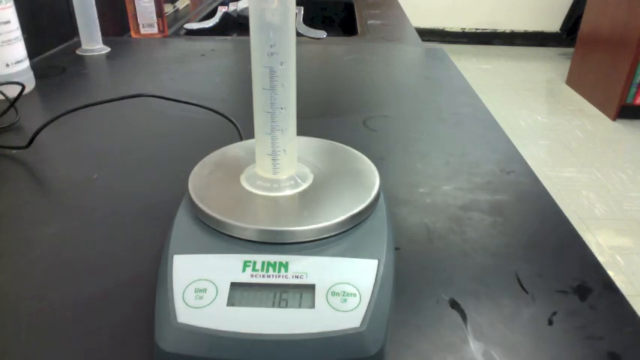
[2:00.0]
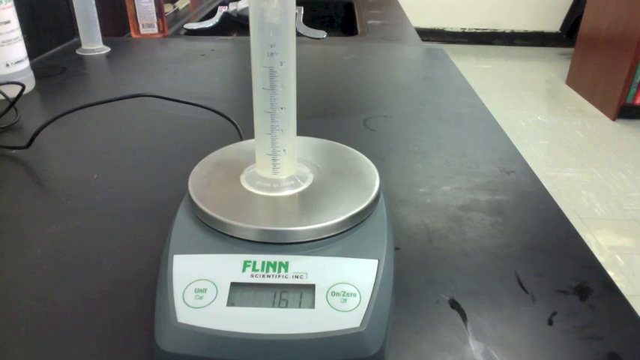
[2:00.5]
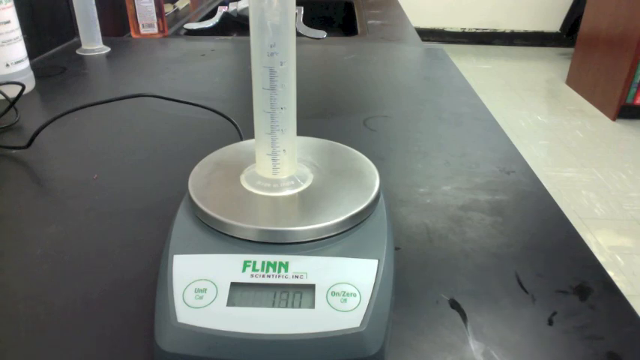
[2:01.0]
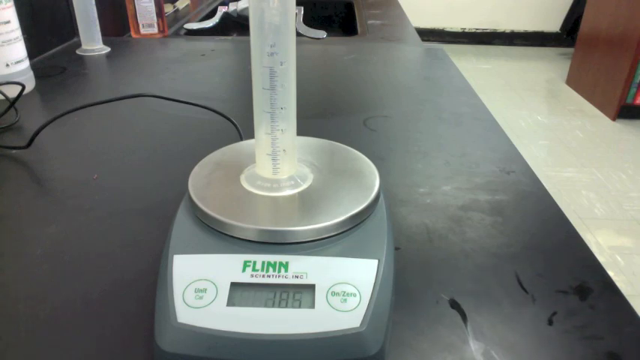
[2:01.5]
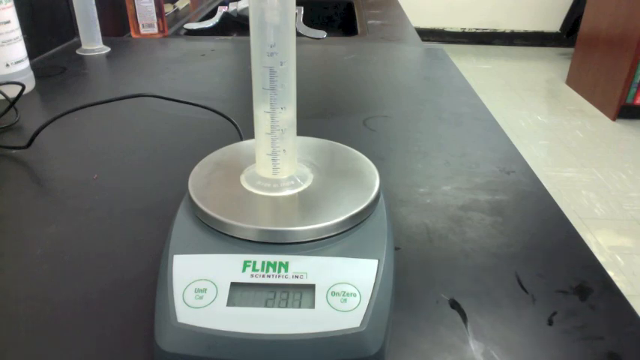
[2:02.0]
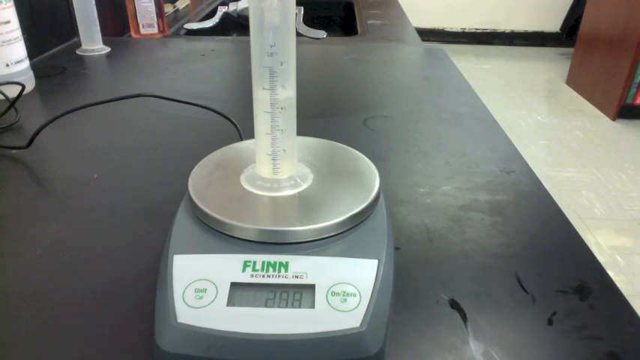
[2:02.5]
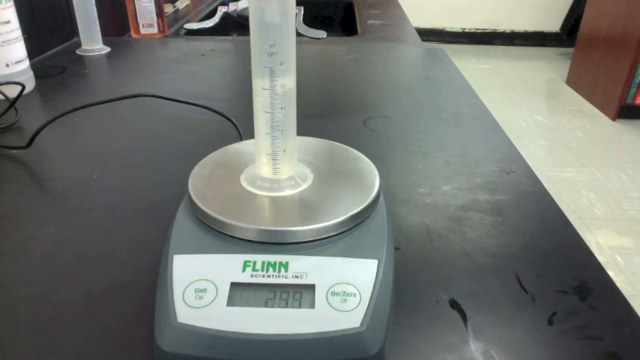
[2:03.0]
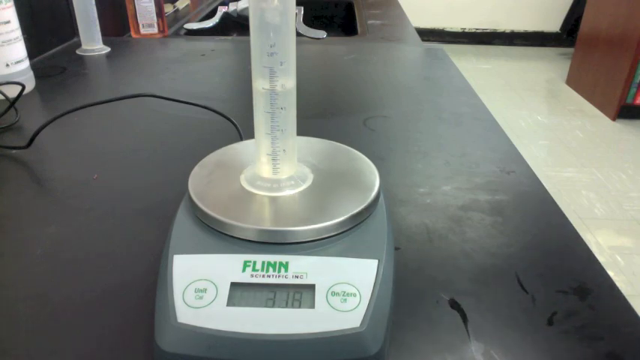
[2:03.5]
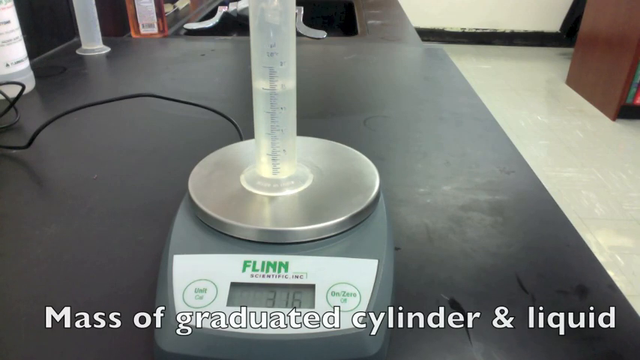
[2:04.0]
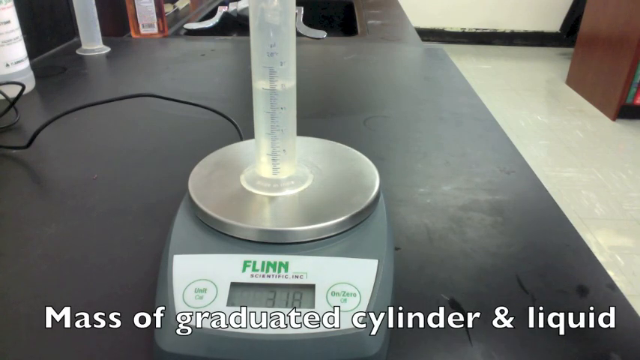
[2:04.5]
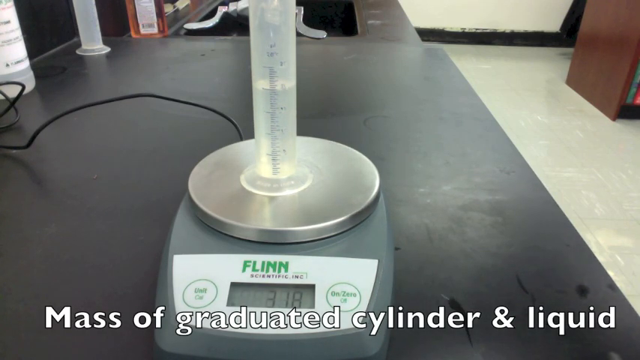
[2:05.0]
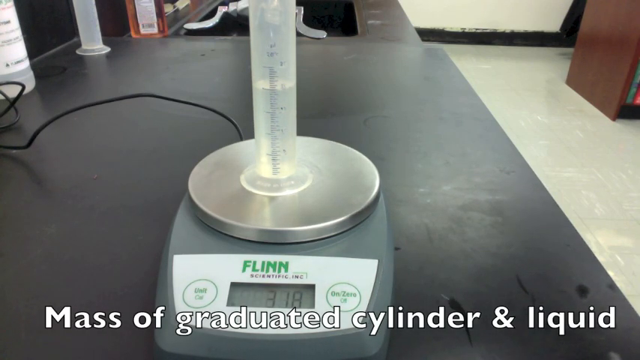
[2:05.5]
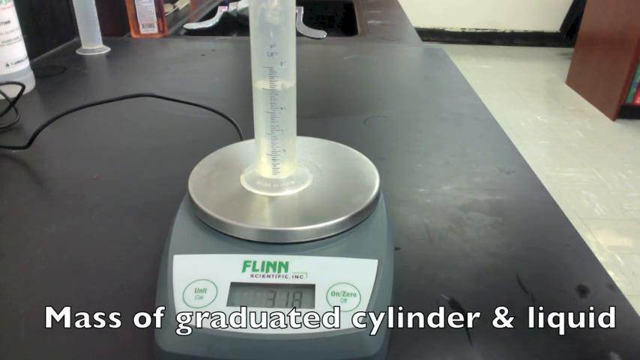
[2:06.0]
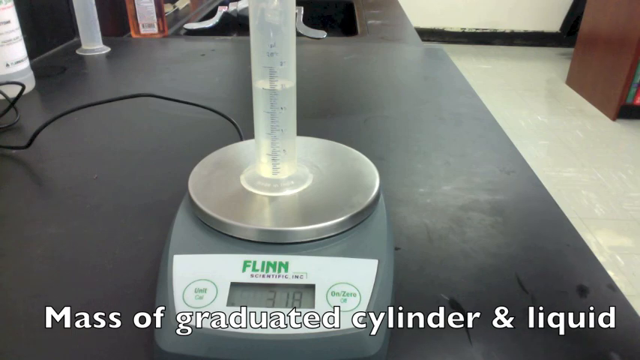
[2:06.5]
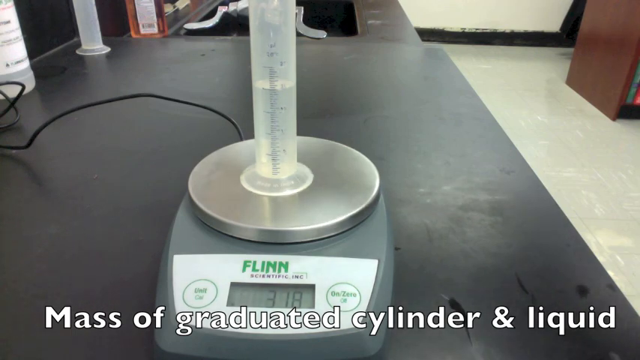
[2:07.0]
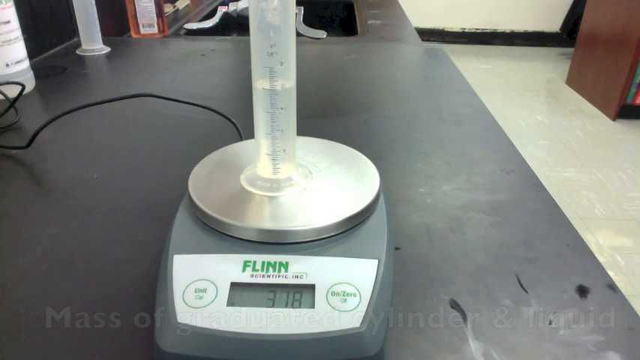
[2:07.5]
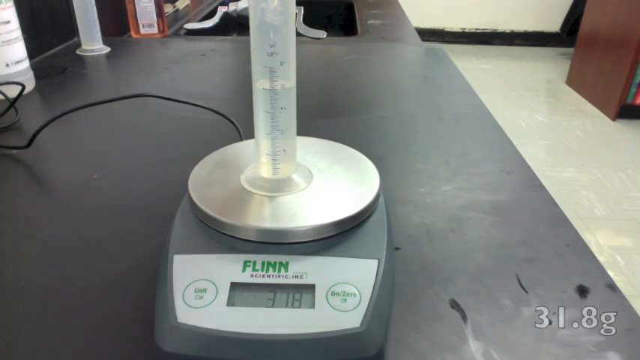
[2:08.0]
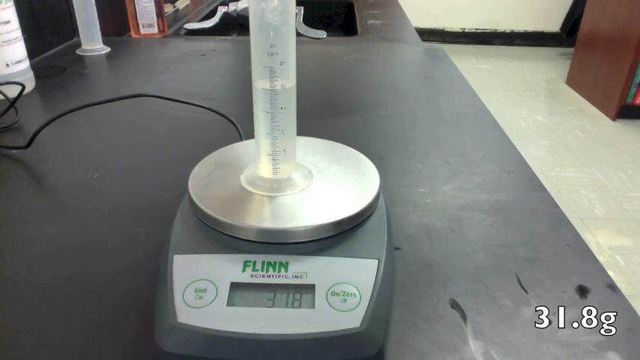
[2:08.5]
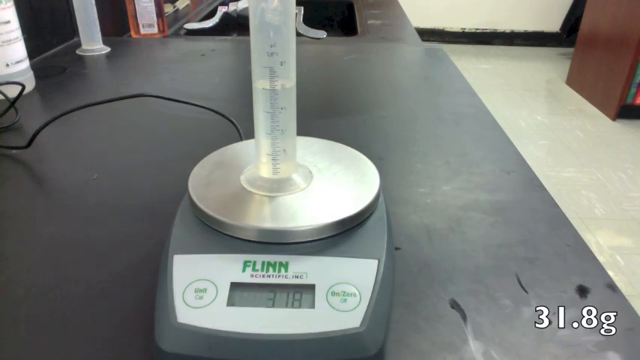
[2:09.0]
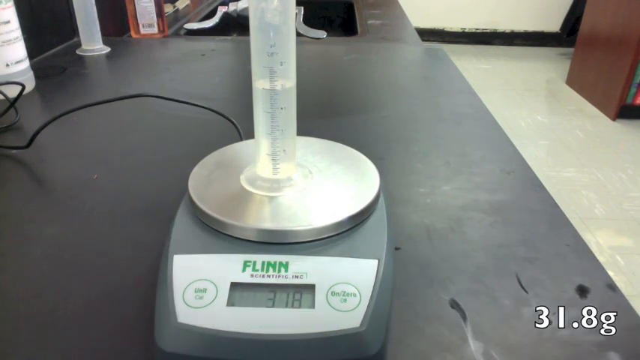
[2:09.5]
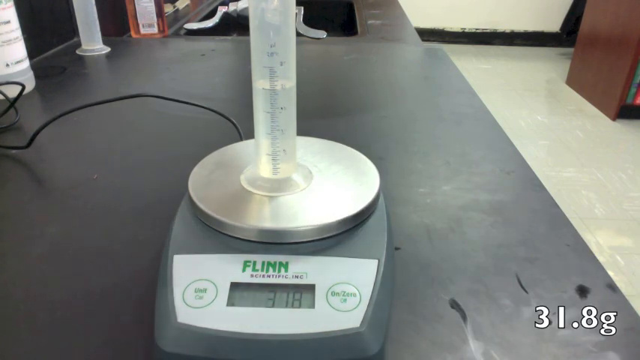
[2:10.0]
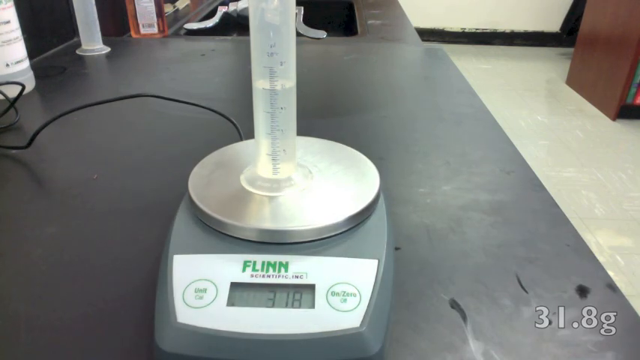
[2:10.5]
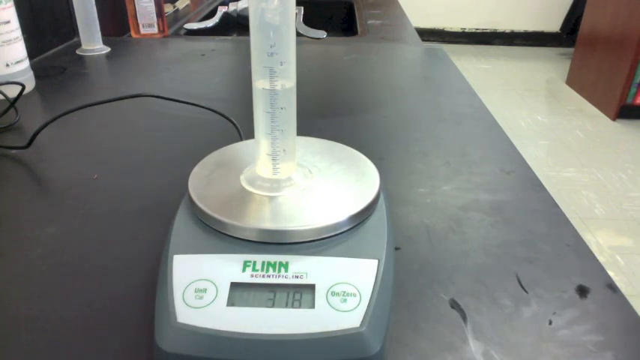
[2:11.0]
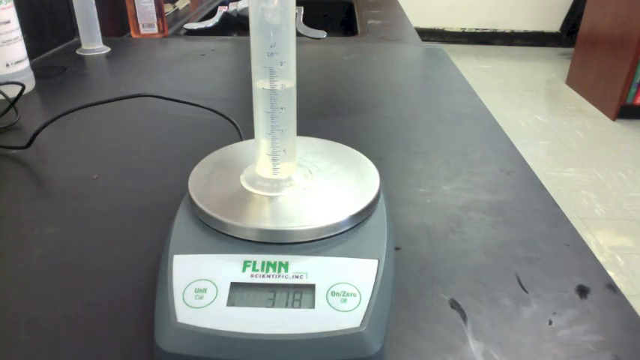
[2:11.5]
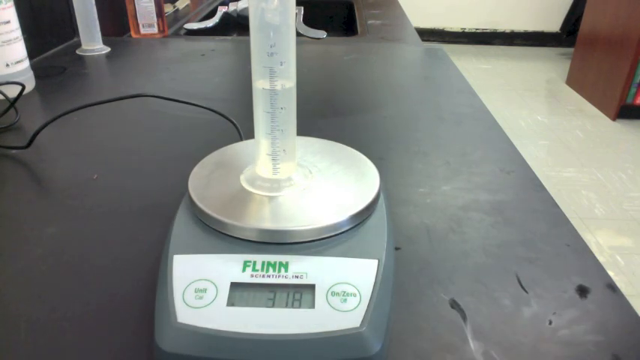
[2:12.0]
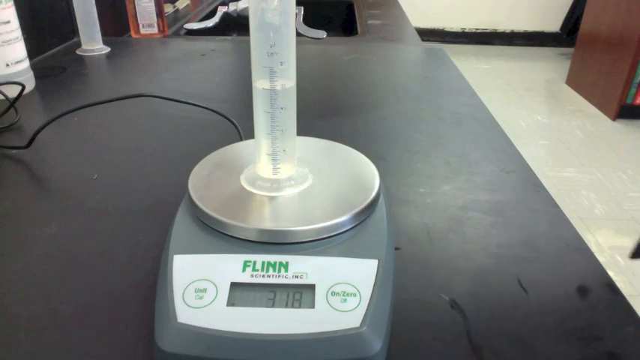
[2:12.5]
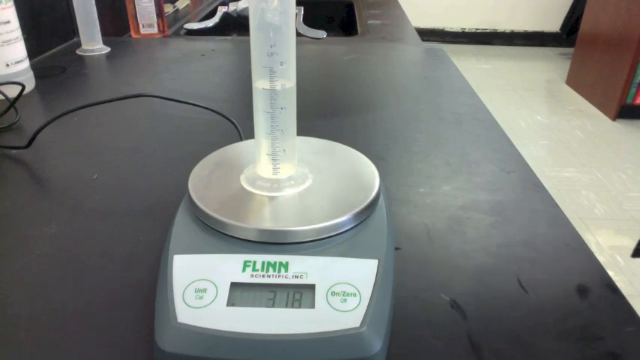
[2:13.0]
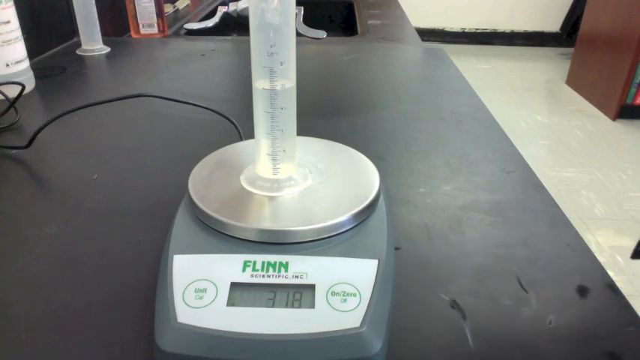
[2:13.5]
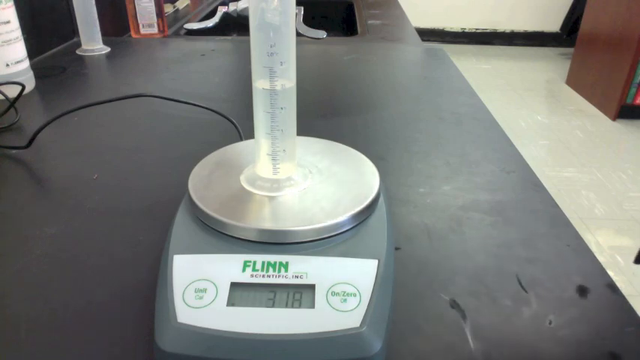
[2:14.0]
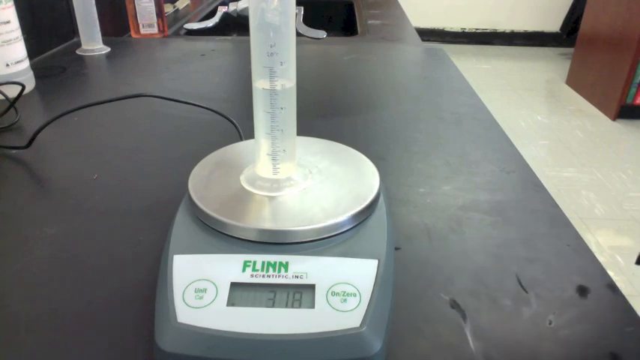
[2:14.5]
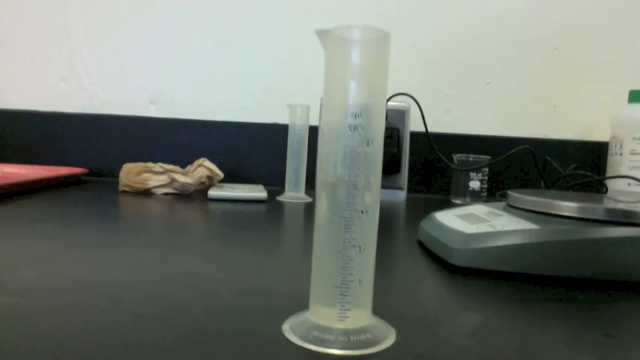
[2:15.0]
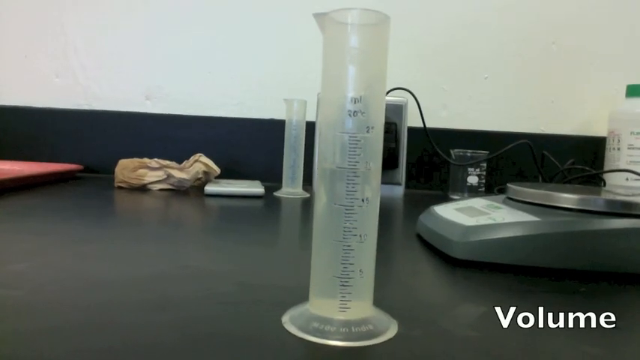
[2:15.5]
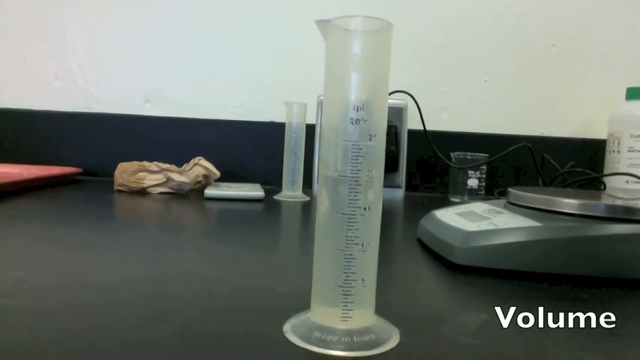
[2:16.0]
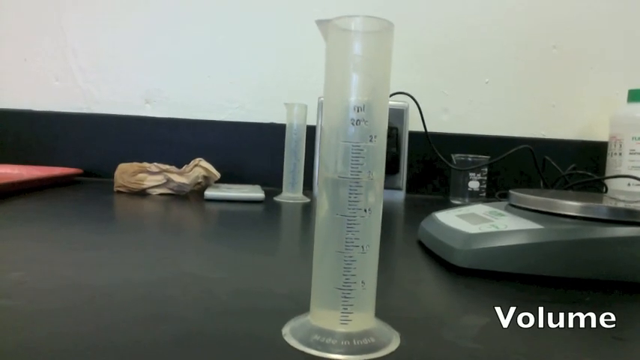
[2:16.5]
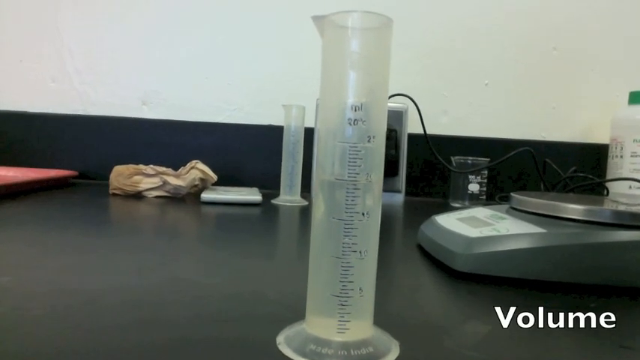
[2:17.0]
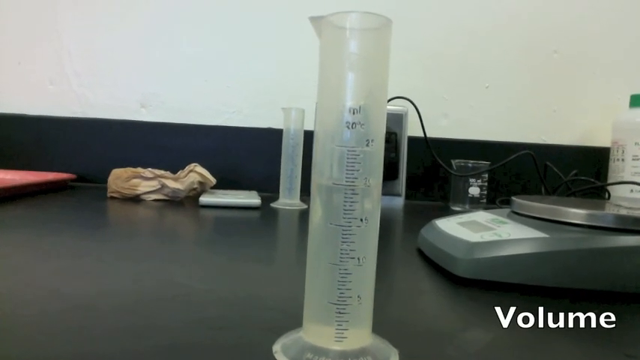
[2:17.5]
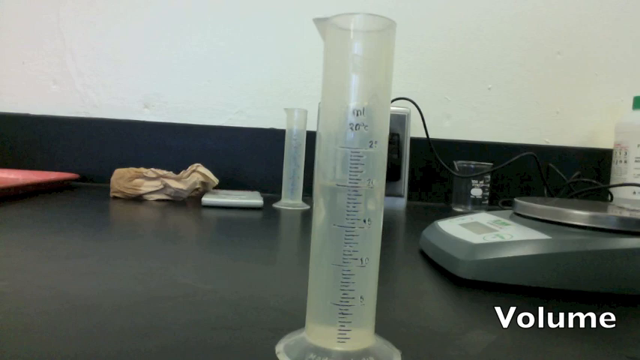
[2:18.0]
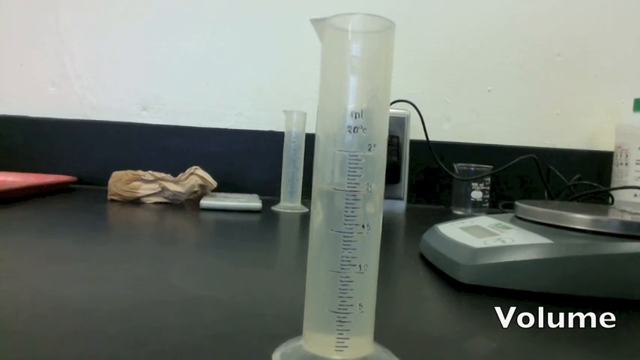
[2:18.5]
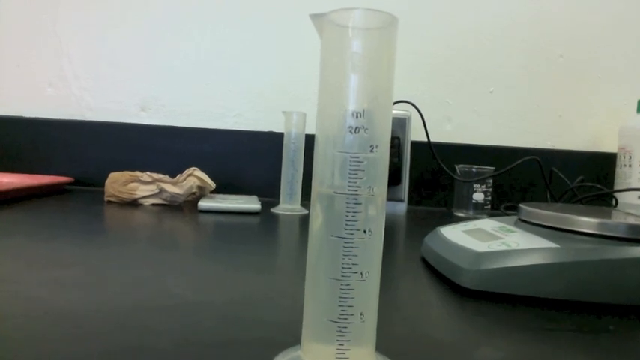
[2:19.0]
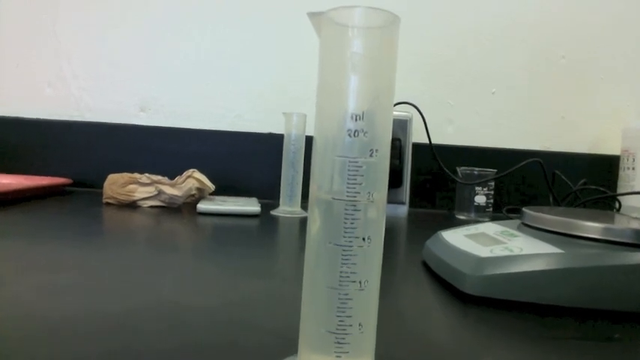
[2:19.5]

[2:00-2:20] A black table has a scale on it; the silver part that weighs things is round. A long cylinder pointing up is on the scale. A black board comes out of the back of the scale and curves to the left side of the screen. Tile floor is visible on the right side of the screen. The numbers change as water fills the beaker on the scale, and text at the bottom reads "mass graduated cylinder and liquid". Shadows move across the screen from someone's arm moving above the camera. The camera then zooms in on the beaker. The scale is now facing toward the left side of the screen and is on the right side of the screen. At the bottom right of the screen, the word "volume" appears. All of the lettering is white.